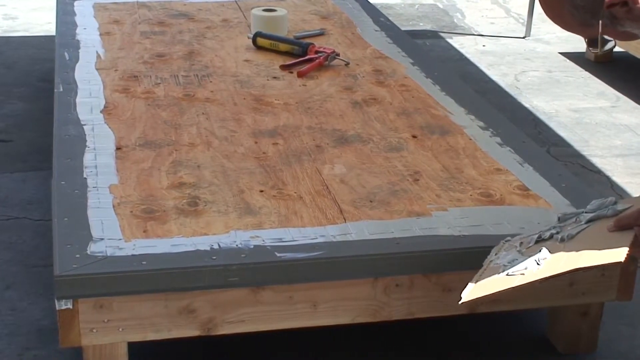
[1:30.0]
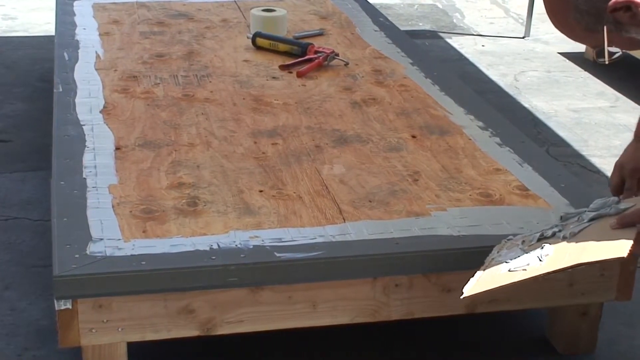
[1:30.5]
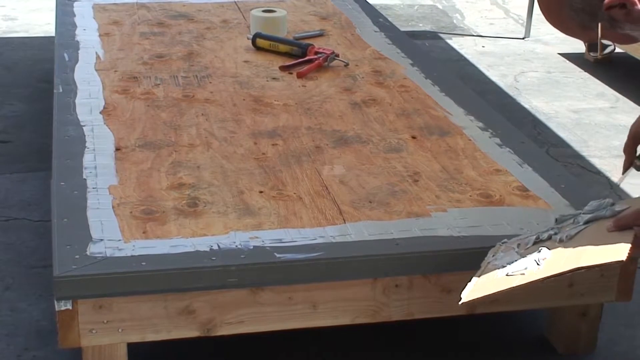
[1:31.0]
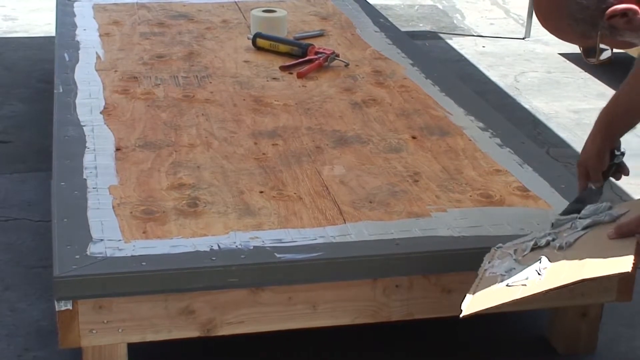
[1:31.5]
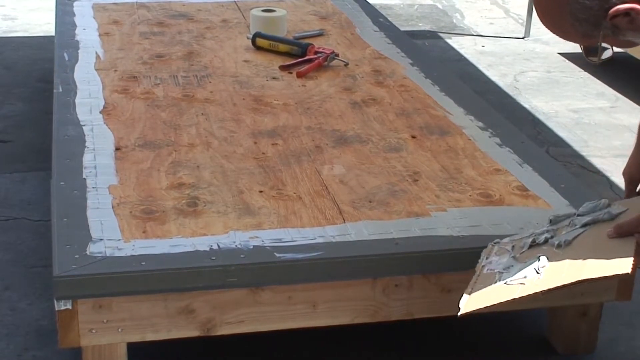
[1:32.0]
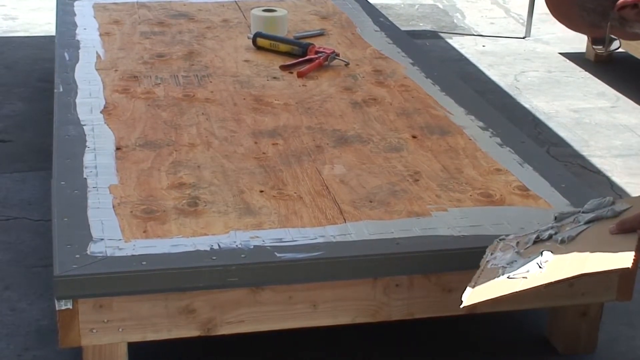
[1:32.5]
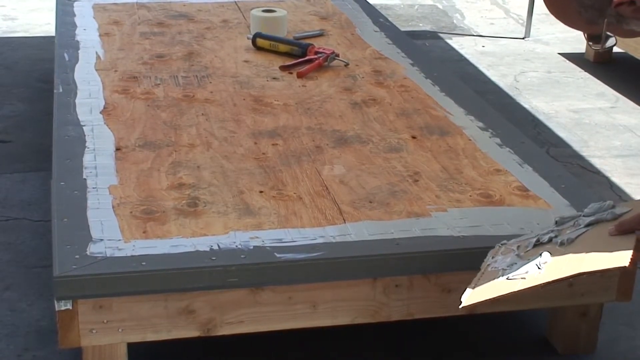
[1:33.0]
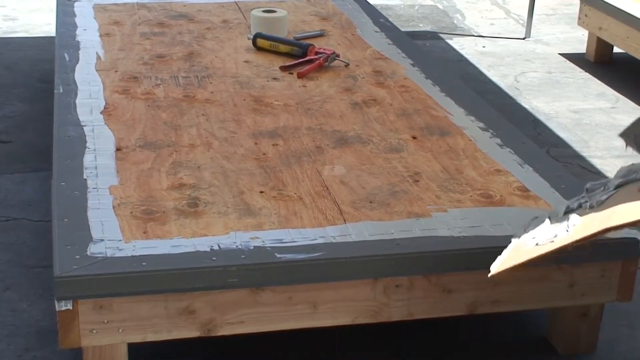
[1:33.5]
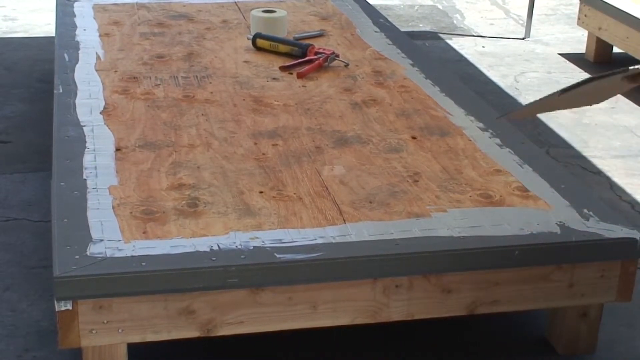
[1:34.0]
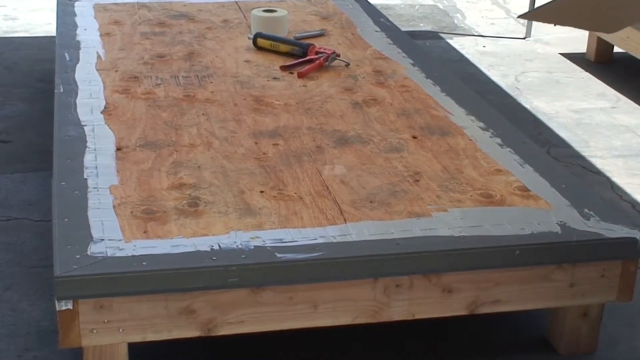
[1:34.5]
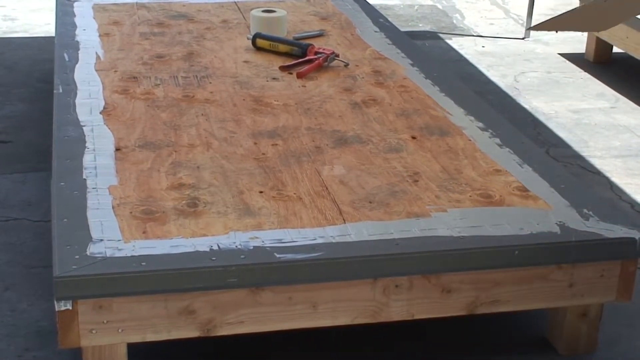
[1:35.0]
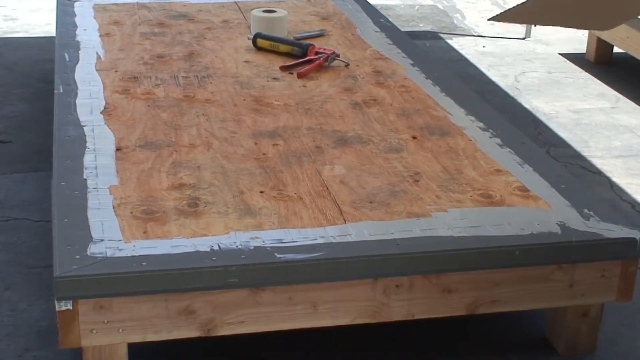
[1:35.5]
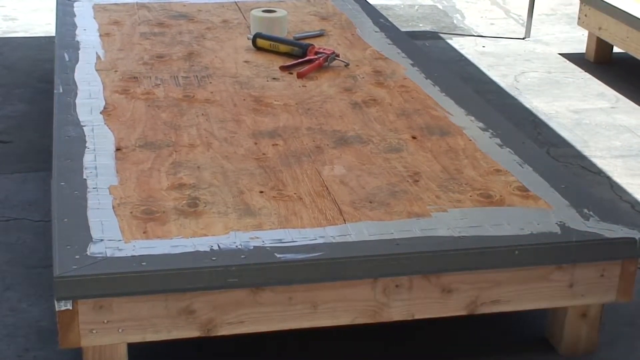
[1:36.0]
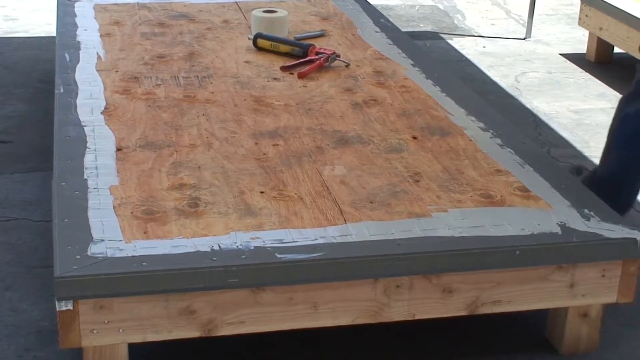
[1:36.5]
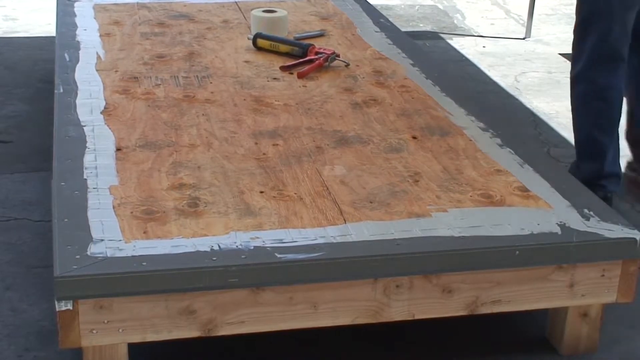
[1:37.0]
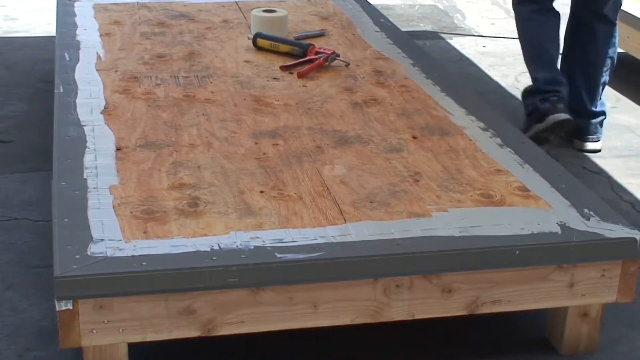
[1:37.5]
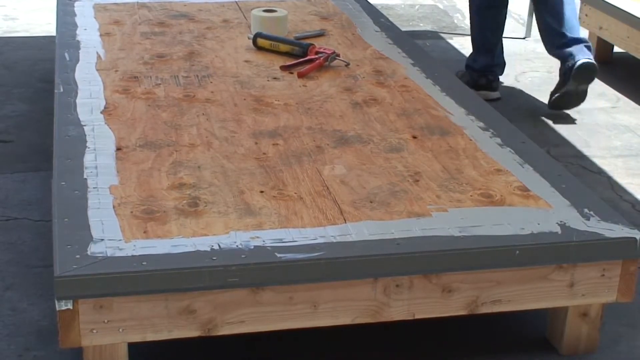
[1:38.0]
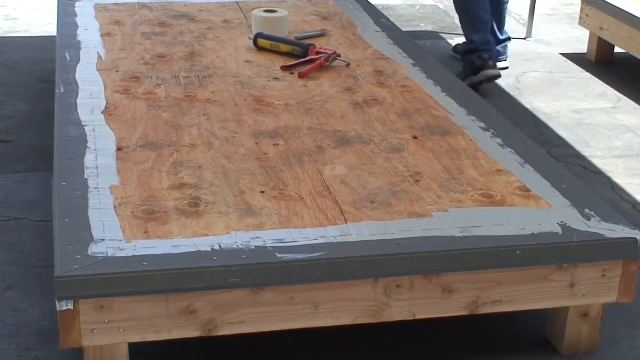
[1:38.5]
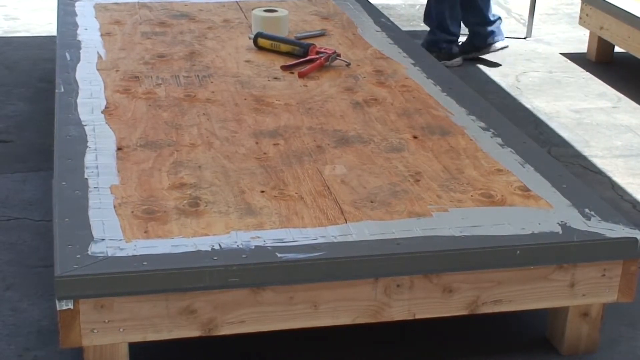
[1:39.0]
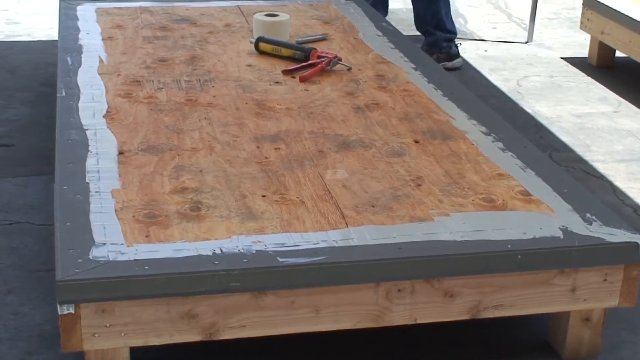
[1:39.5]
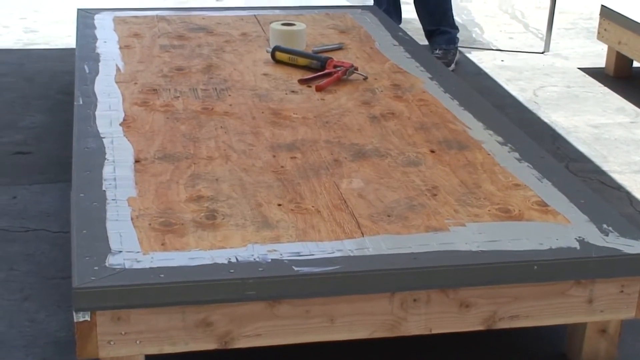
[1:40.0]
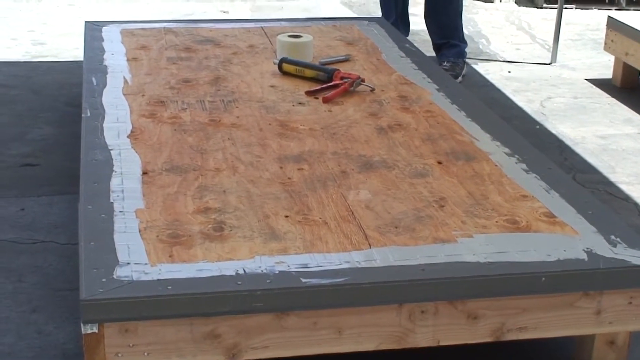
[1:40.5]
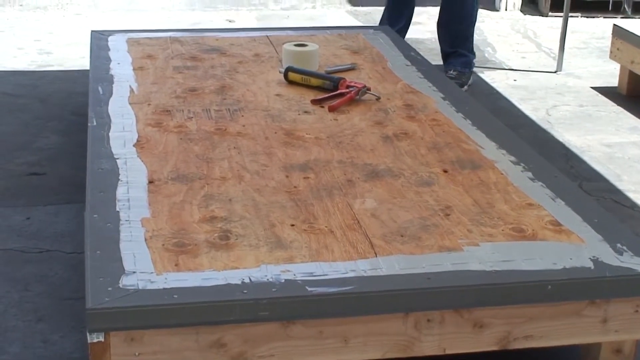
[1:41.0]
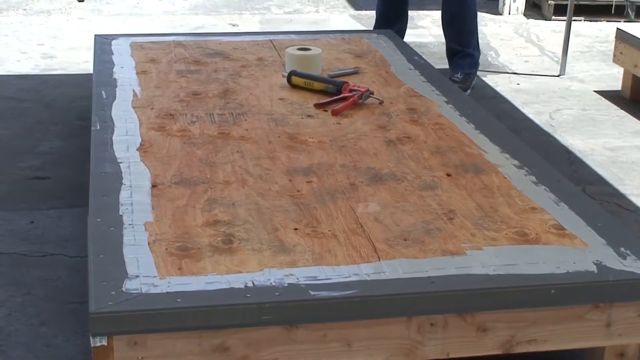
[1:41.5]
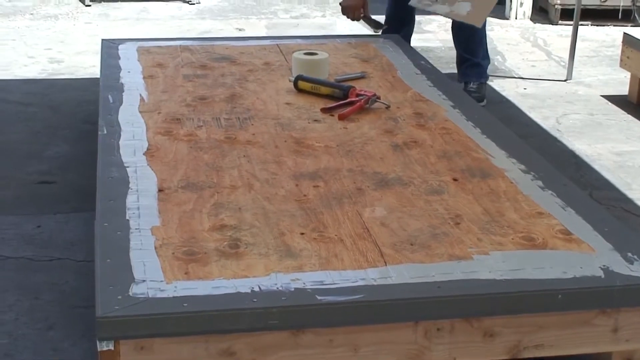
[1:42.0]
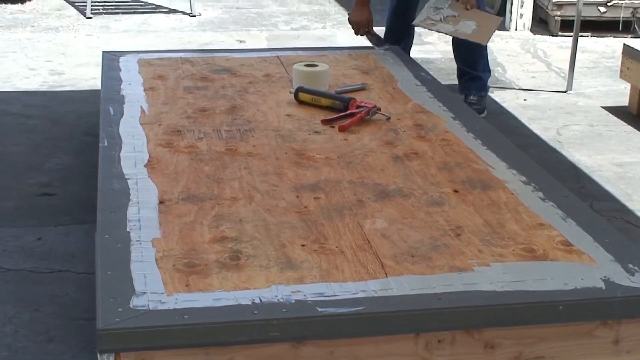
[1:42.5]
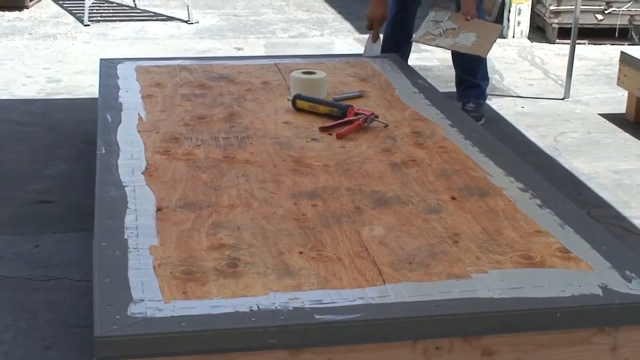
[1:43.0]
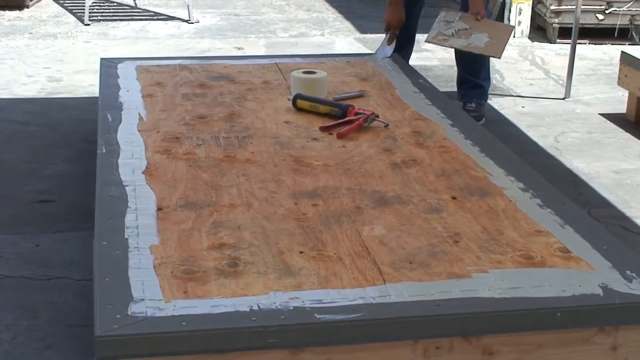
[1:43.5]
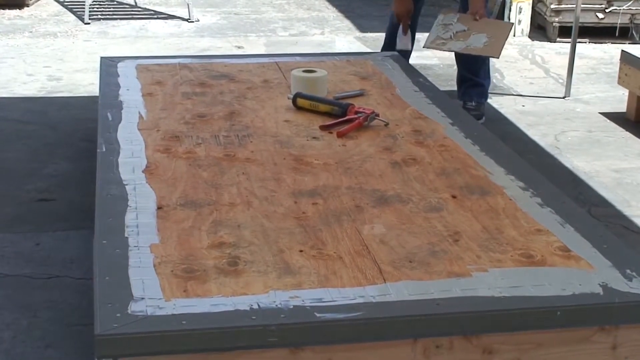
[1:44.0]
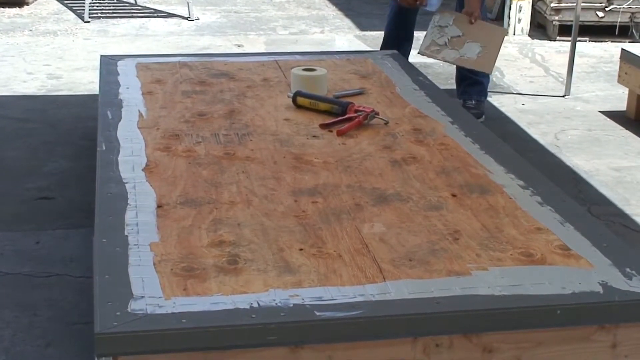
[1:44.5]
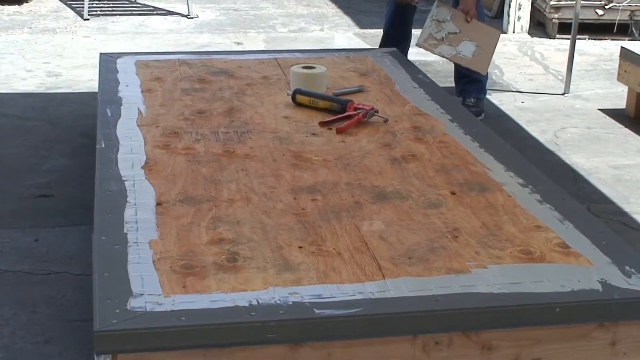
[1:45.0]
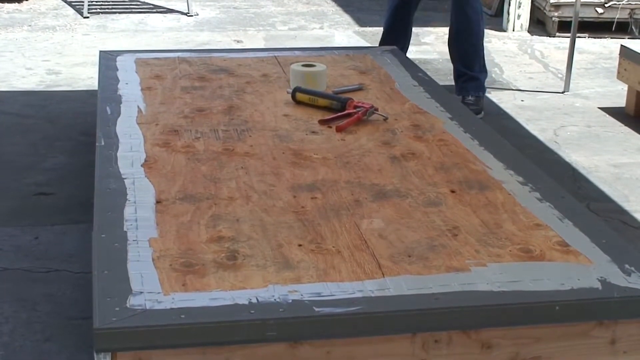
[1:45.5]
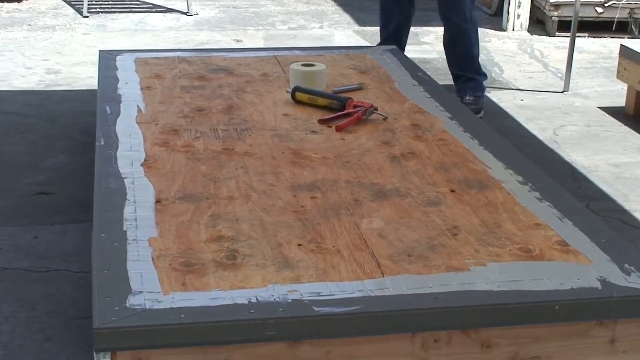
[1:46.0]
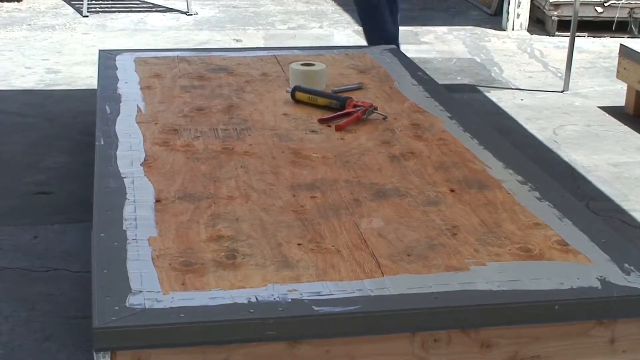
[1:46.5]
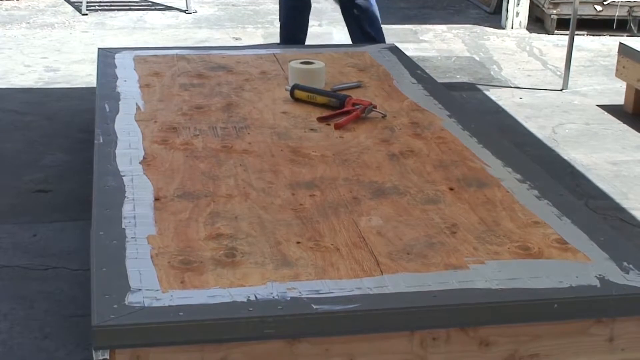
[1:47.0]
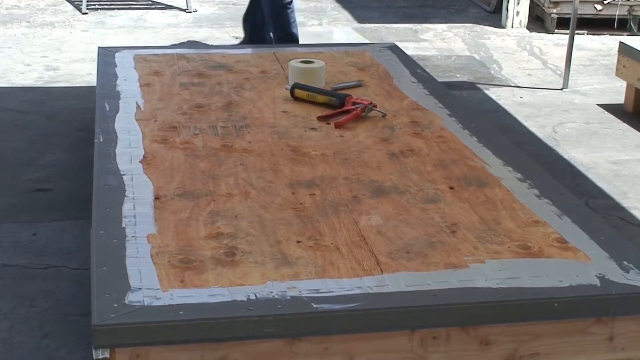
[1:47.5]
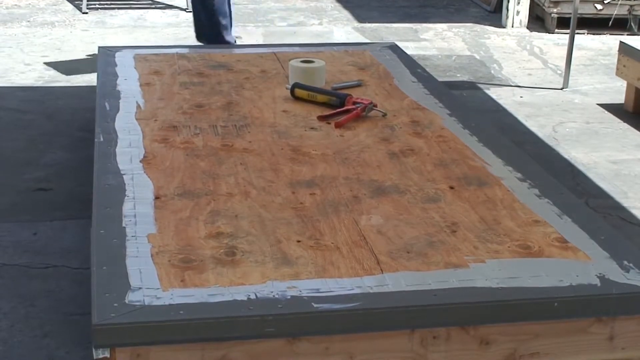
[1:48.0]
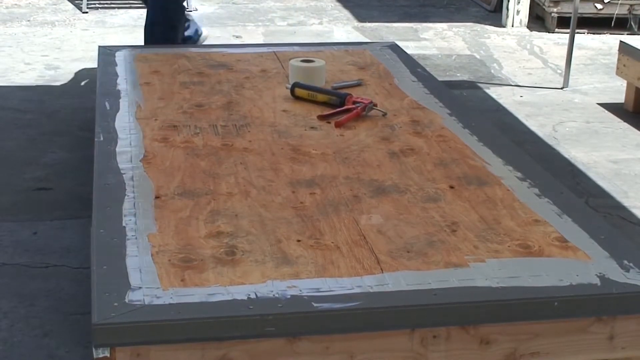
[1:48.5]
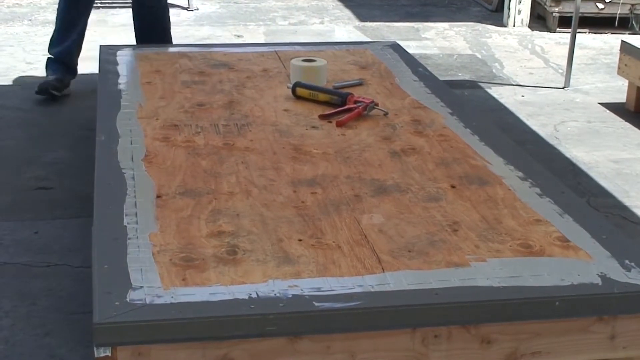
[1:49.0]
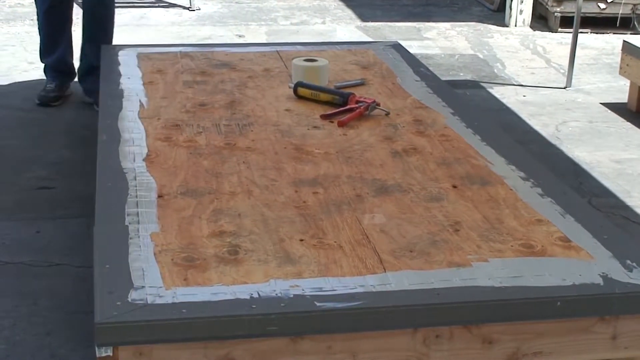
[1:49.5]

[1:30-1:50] The man, who wears a face mask and glasses and is quite old, holds a piece of cardboard with adhesive in his left hand and spreads the corners of the decking where the joint meets the edge. He walks toward the right-hand side and back of the decking and spreads adhesive over the back right-hand corner. It is quite a sunny day, with shadows visible on the ground and sunlight shining down in the background. The decking is slightly raised, and the board is quite knotted, quite dirty, and an orangey shade with brown. In the center of the decking are the syringe, a roll of tape or something, and a craft knife. The man walks around the back and sides of the decking in trainers and blue jeans; just his feet are visible as the camera zooms in toward the floor area.